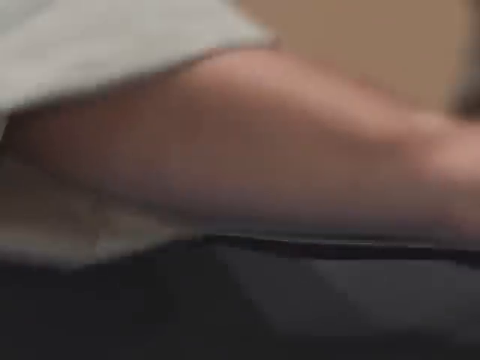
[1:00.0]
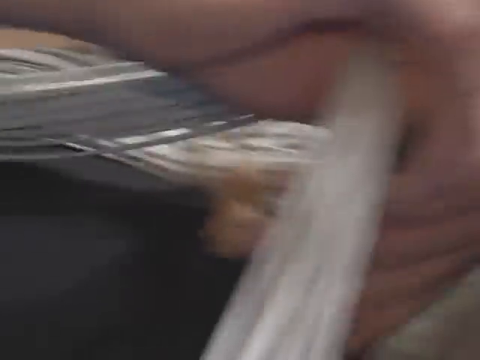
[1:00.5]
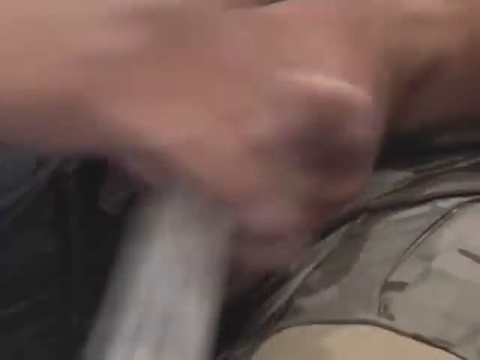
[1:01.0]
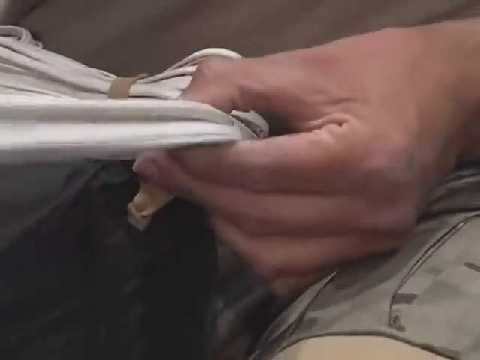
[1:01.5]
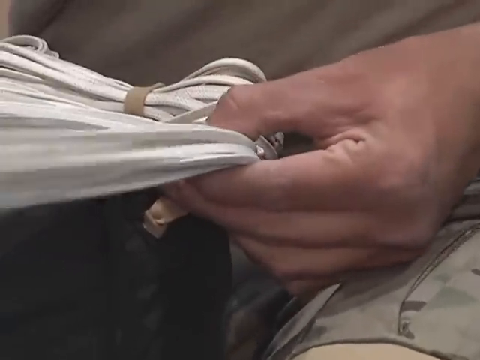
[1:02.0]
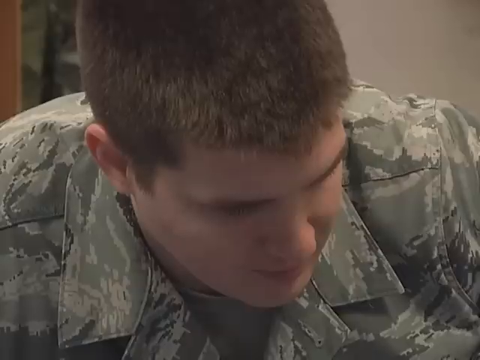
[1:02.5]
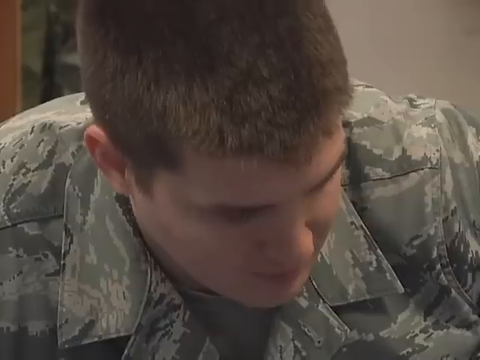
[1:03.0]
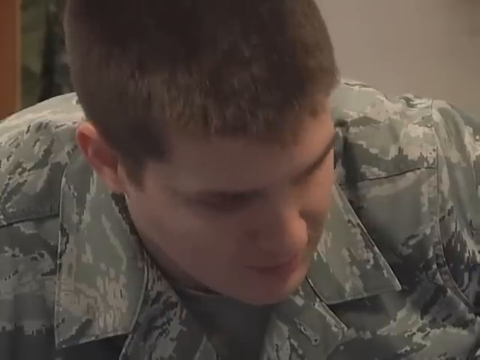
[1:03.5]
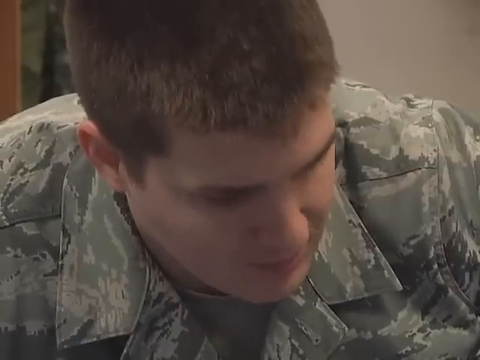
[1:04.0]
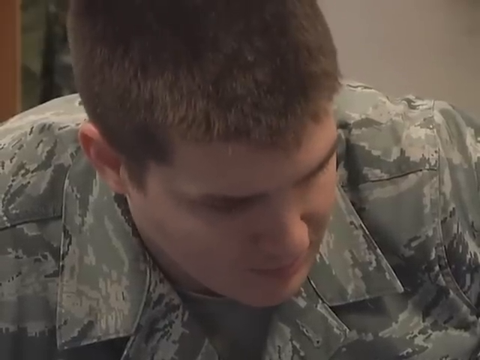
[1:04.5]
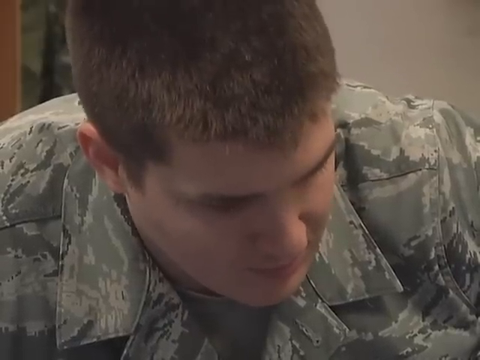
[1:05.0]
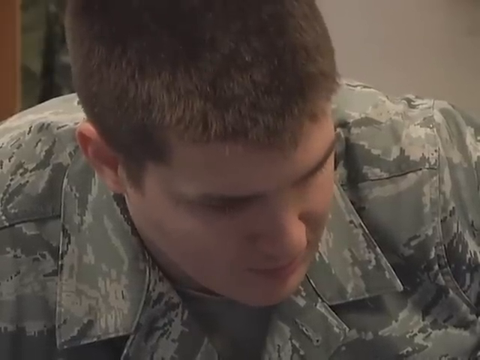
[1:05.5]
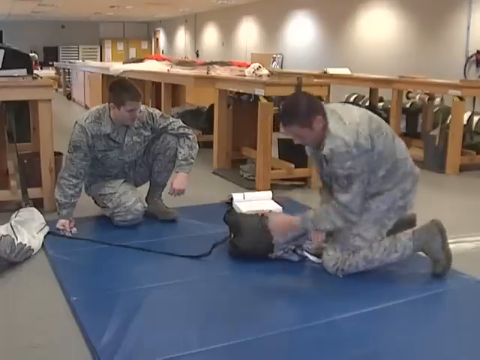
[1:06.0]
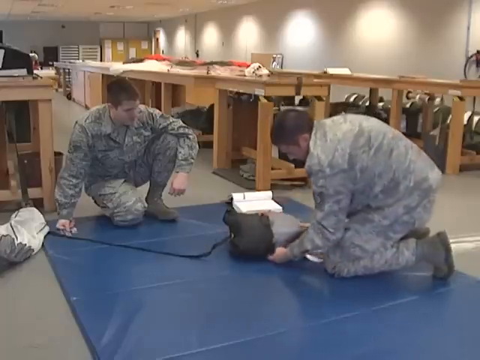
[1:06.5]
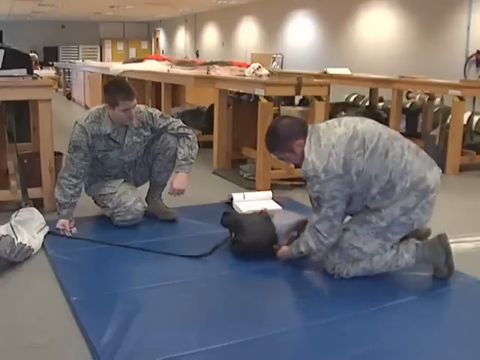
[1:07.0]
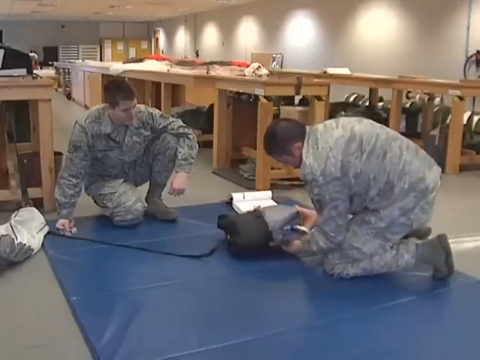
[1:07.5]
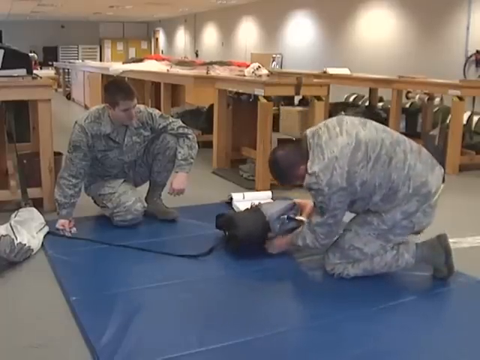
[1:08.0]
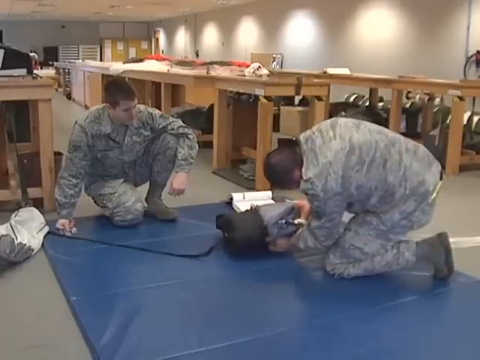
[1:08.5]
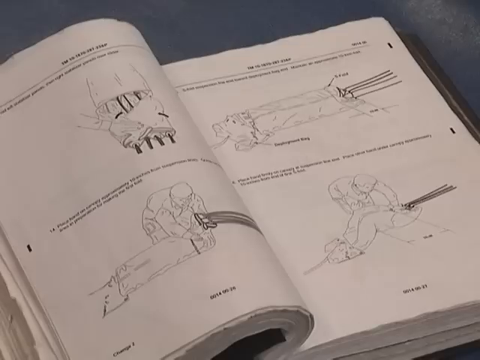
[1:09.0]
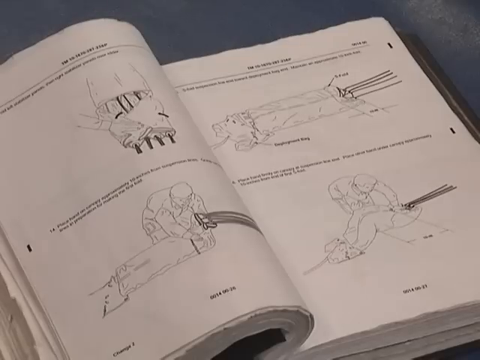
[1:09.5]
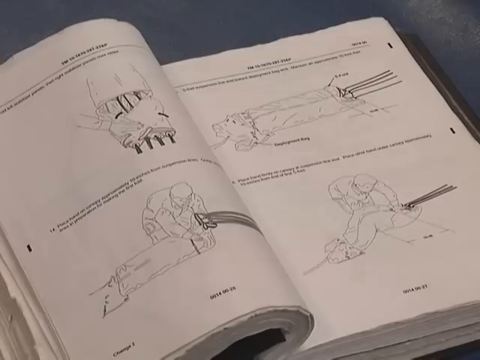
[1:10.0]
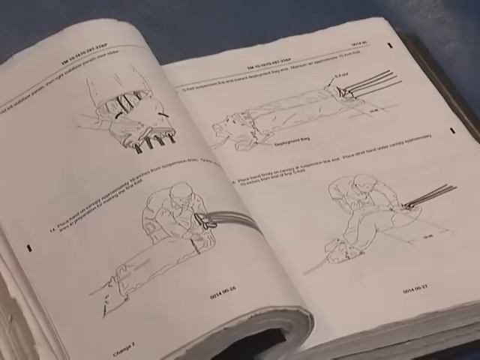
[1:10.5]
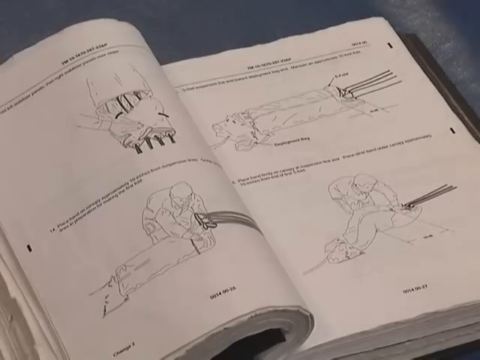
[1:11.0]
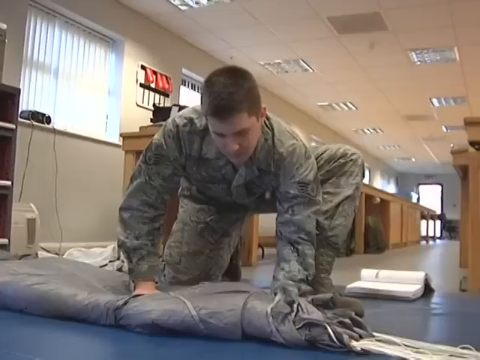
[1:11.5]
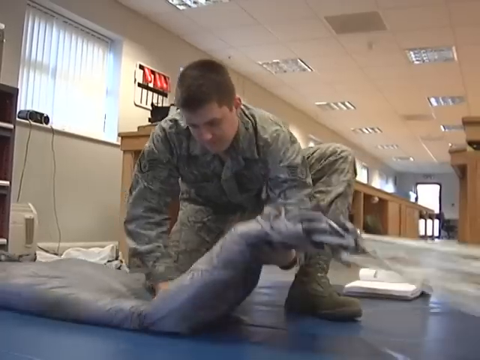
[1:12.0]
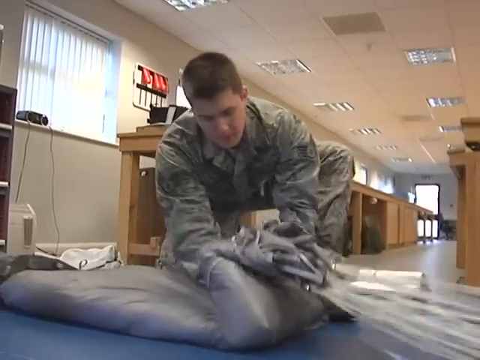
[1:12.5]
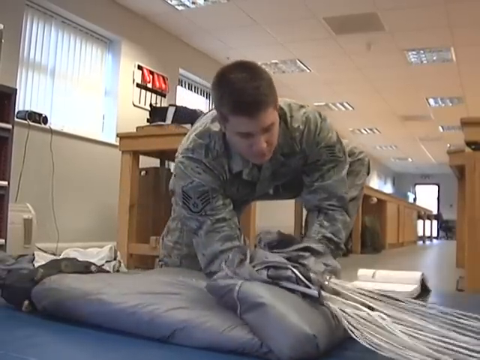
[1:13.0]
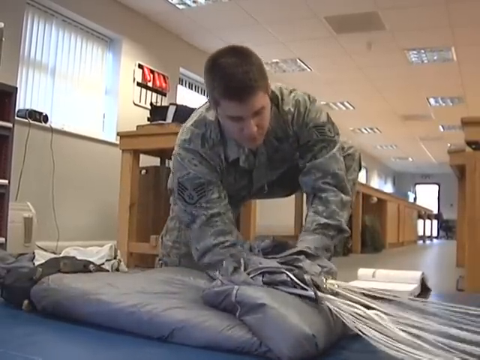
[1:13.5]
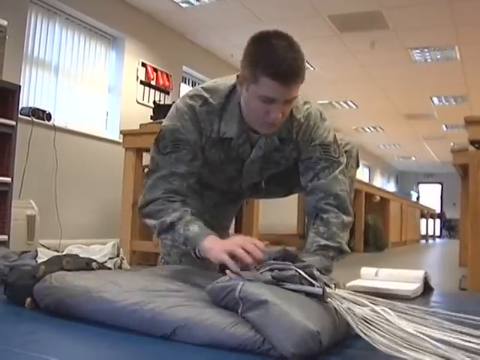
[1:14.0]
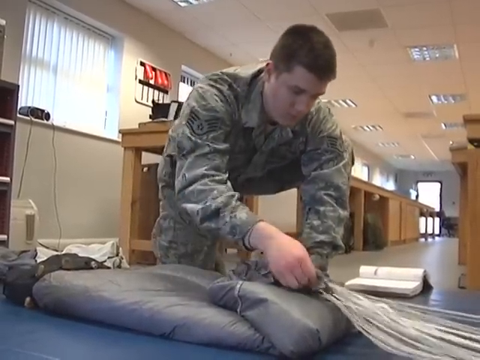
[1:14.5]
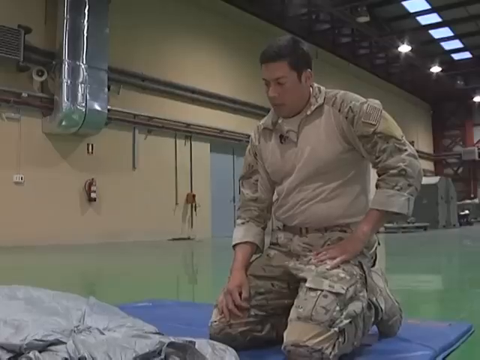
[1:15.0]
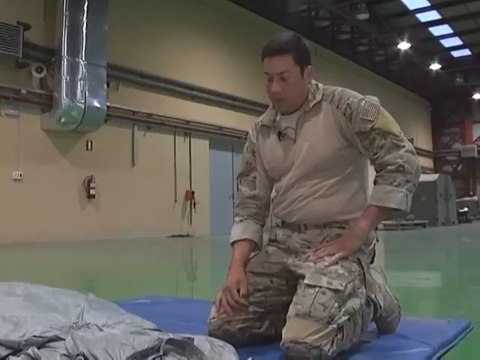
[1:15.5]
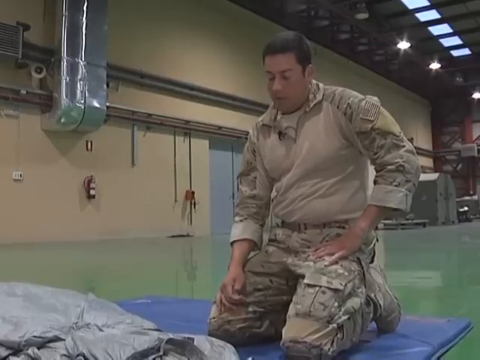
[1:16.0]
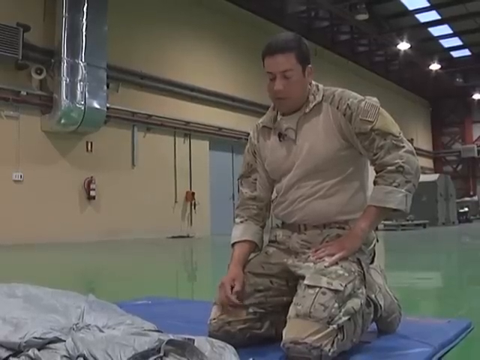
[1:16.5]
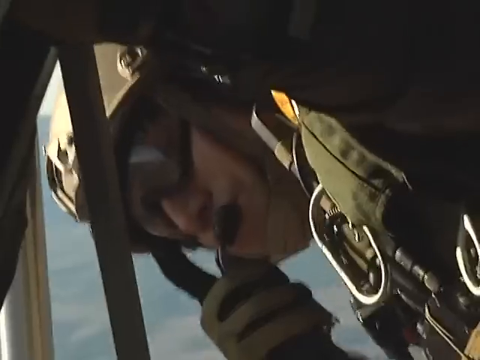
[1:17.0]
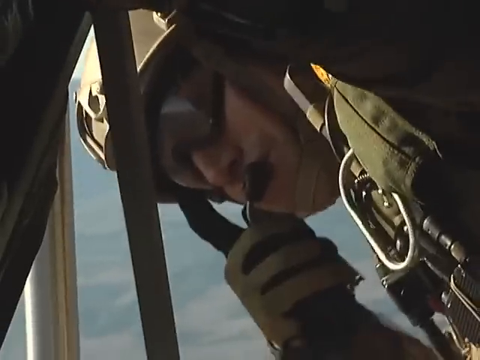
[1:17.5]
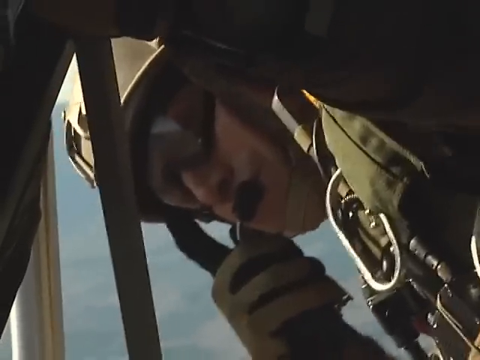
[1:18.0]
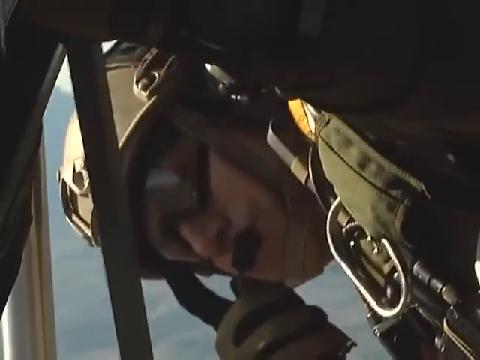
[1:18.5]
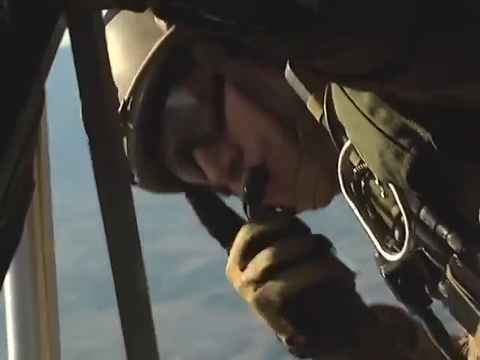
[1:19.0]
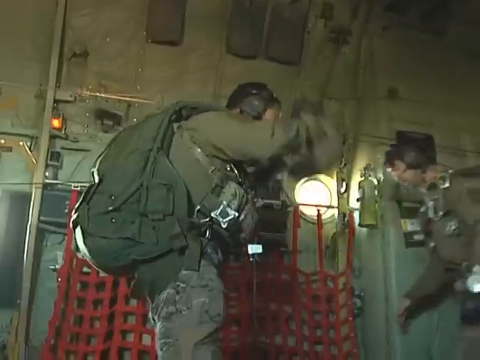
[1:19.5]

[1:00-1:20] Briefly, someone's hands tie a group of white strings or ties that look like white shoelaces into a ball. The scene switches to a young soldier in gray fatigues, shown looking down at something. Two soldiers then kneel on a blue pad on the floor. The soldier whose face was just shown is on the left, with one knee up, his foot on the ground, and his left arm resting on his knee. He watches another kneeling soldier preparing a pack by pushing a folded parachute into a black pack. A close-up shows a manual open to pages that show how to fold a parachute, with four diagrams. One of the officers kneels on the floor with one knee on the ground and his left foot on the ground, leaning over to fold a gray parachute. He first folds the edge with the cords hanging from it over into the center, then arranges the cords. The scene switches to a different officer in beige fatigues kneeling on a blue mat over a folded parachute, looking down at it and speaking to someone off camera. Then there is a view of men inside an army plane as though they are about to jump.